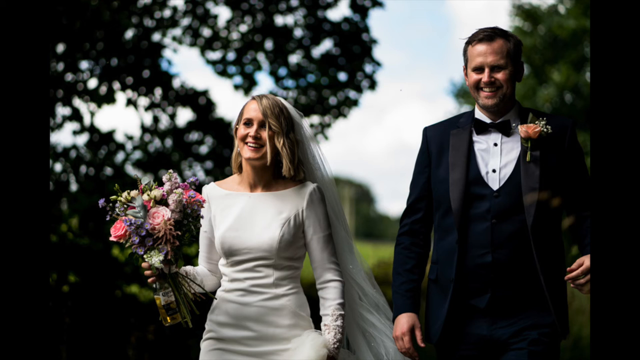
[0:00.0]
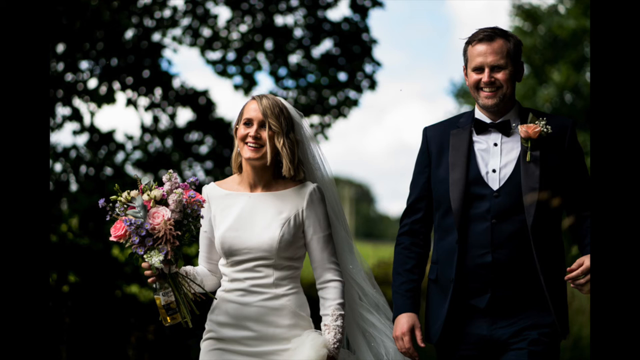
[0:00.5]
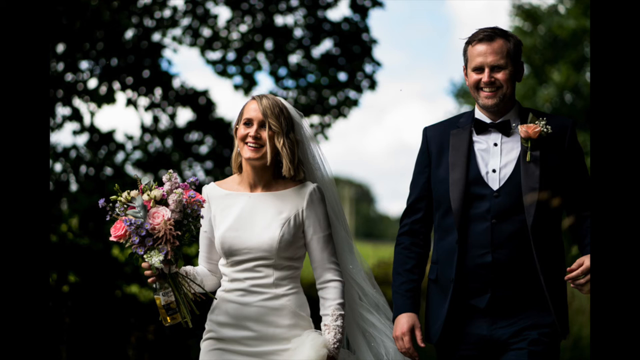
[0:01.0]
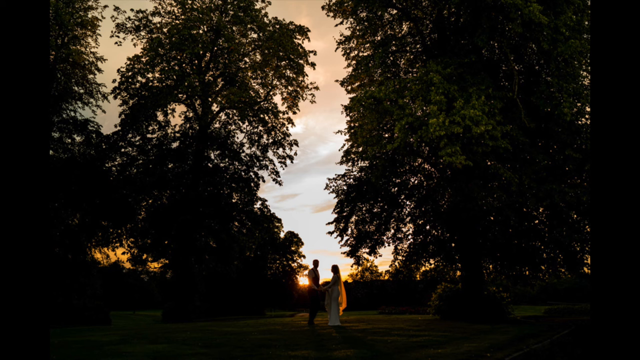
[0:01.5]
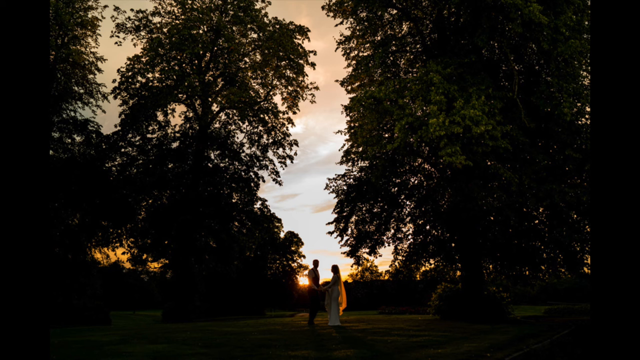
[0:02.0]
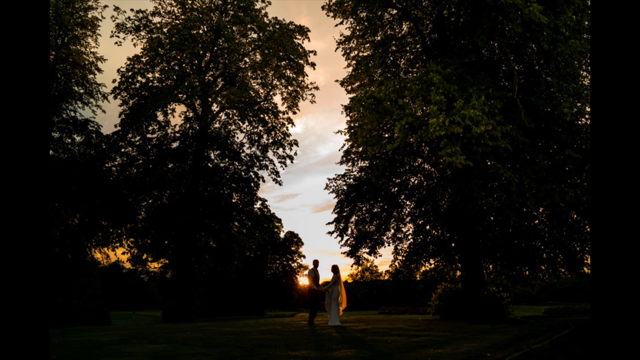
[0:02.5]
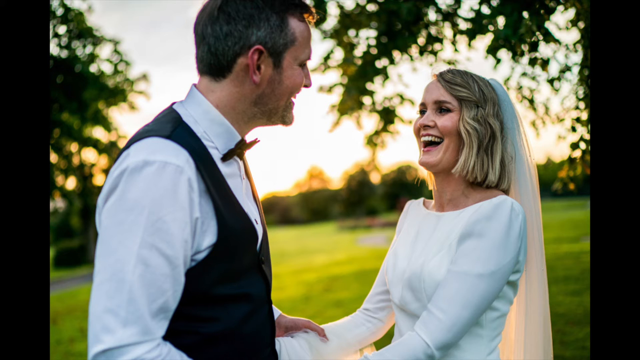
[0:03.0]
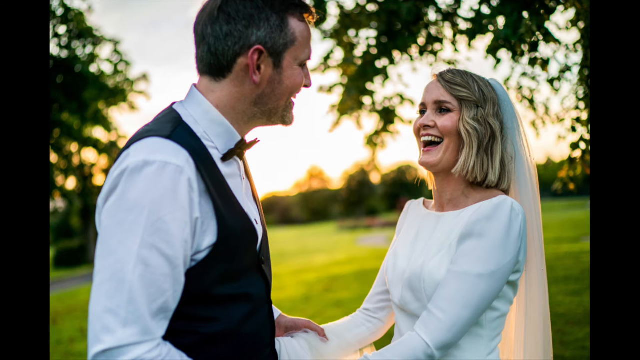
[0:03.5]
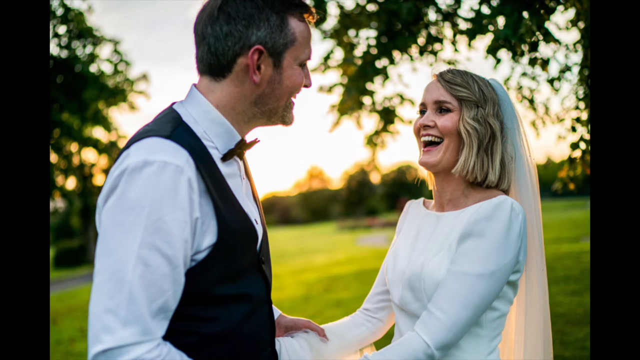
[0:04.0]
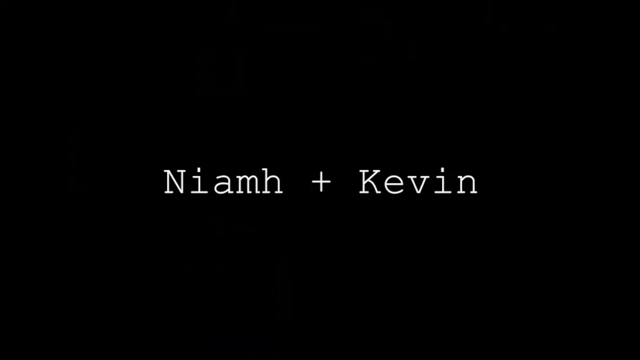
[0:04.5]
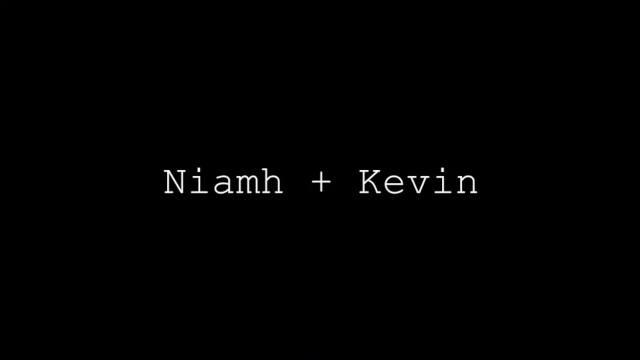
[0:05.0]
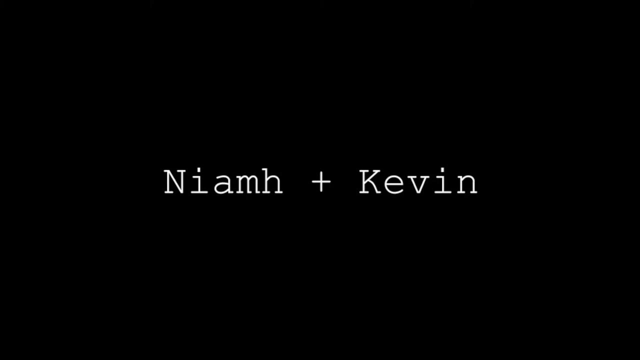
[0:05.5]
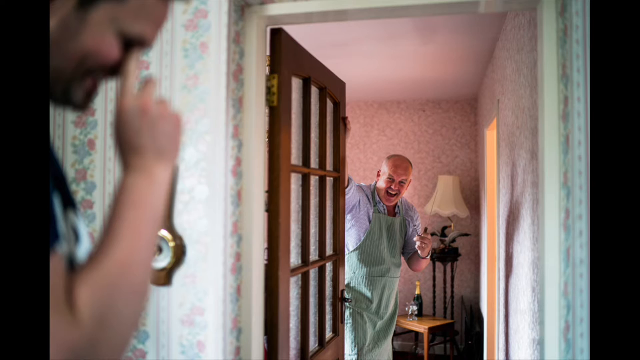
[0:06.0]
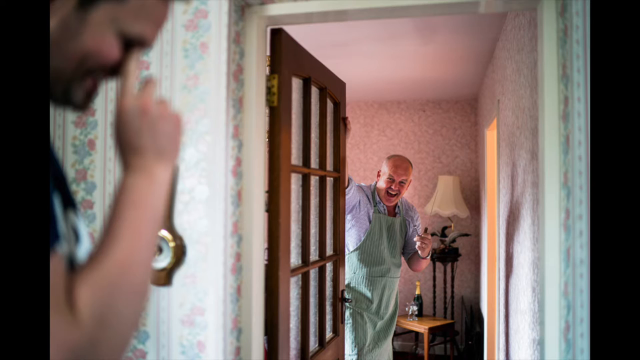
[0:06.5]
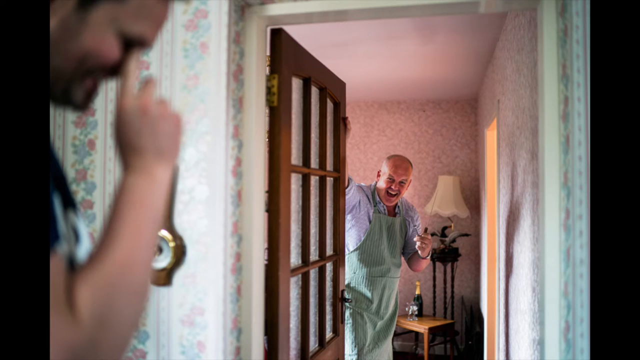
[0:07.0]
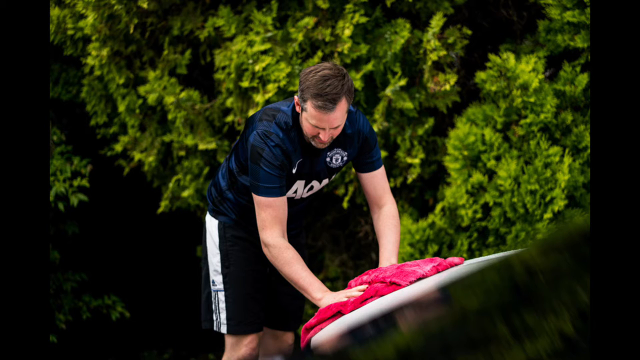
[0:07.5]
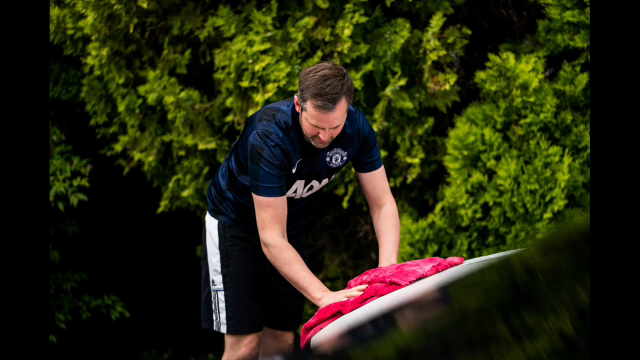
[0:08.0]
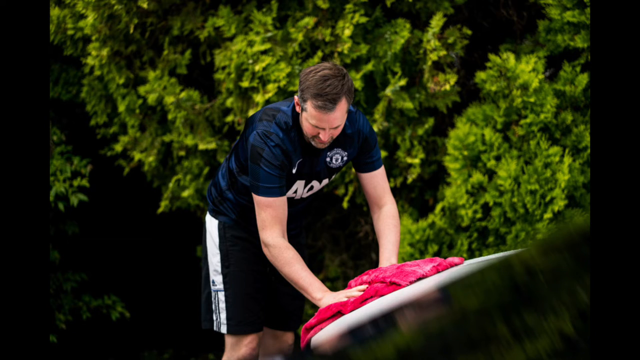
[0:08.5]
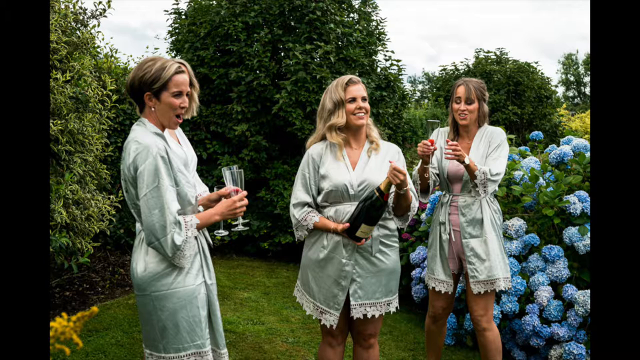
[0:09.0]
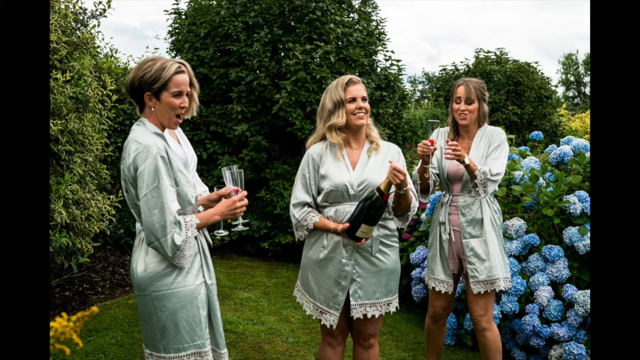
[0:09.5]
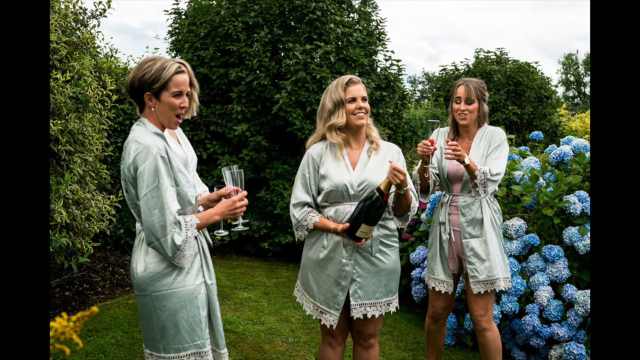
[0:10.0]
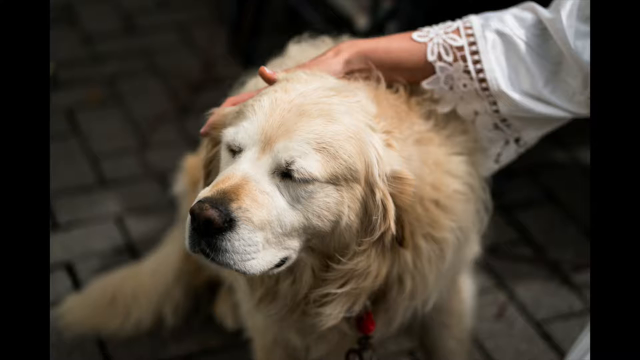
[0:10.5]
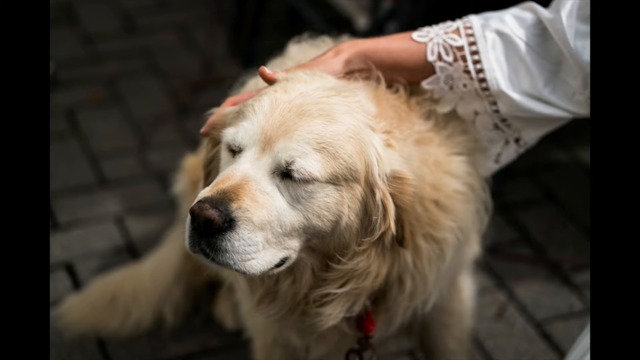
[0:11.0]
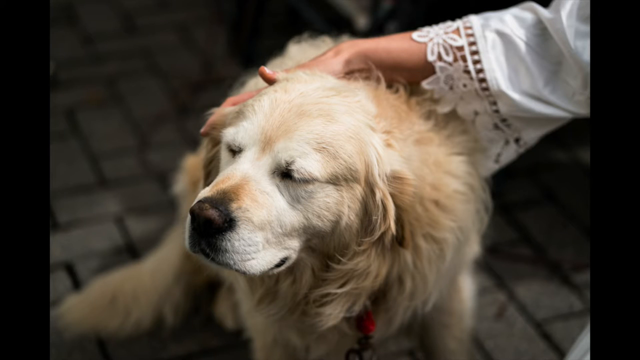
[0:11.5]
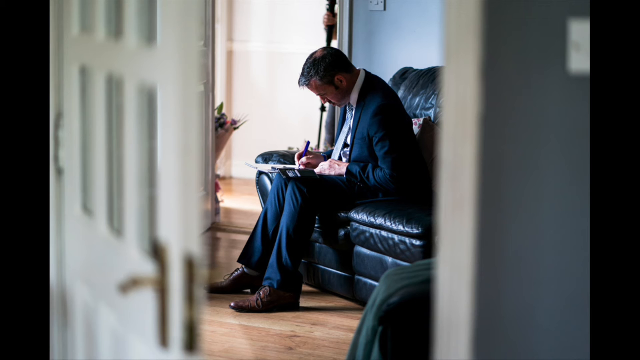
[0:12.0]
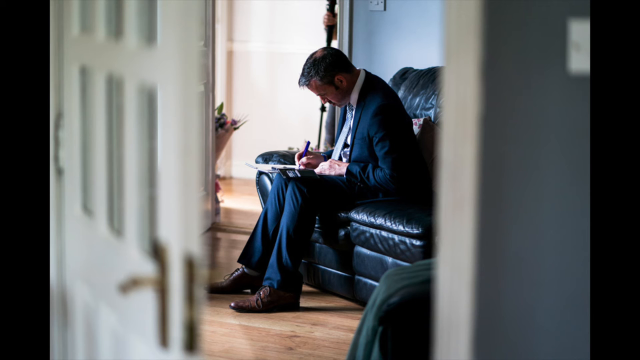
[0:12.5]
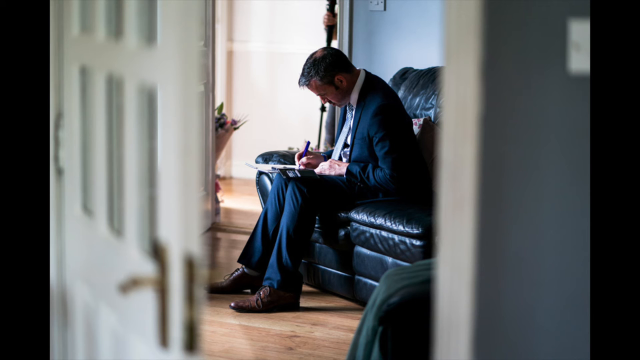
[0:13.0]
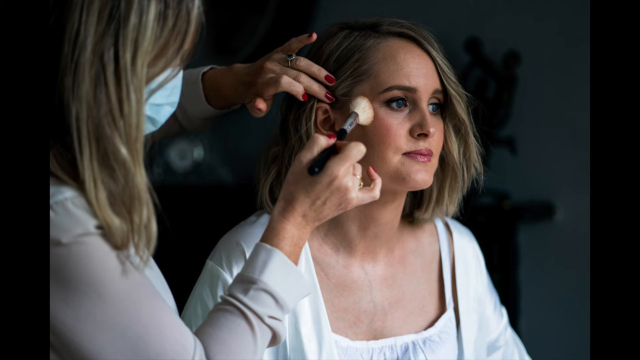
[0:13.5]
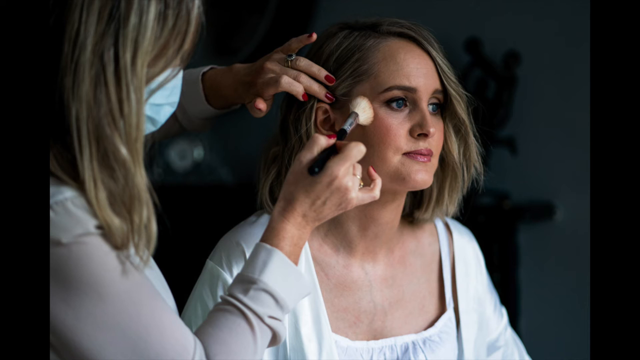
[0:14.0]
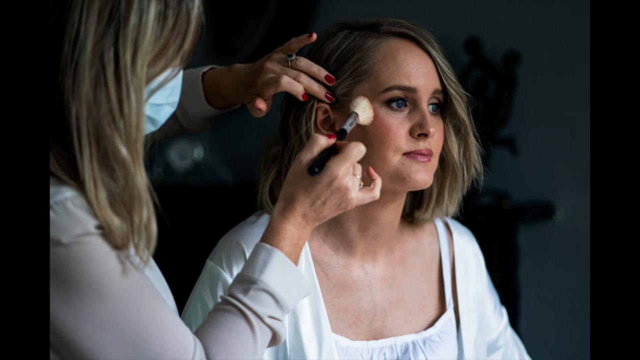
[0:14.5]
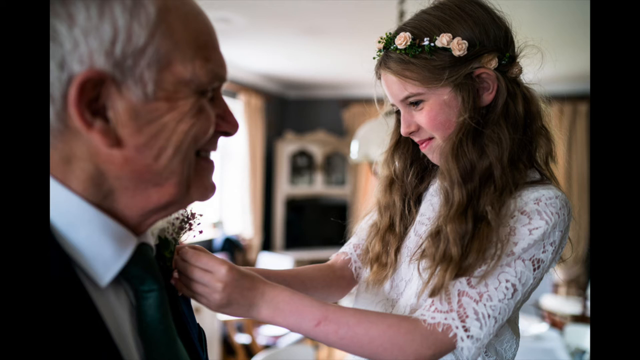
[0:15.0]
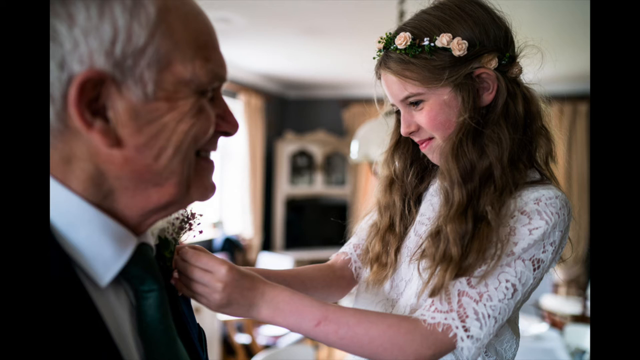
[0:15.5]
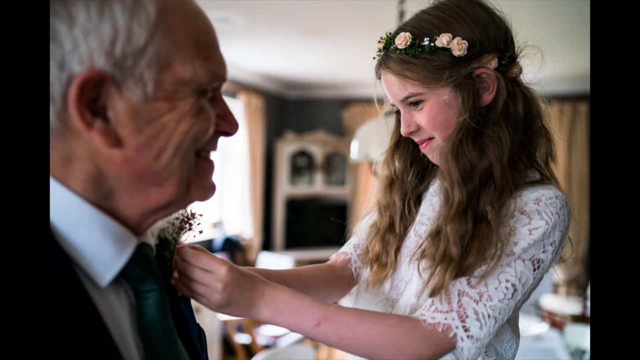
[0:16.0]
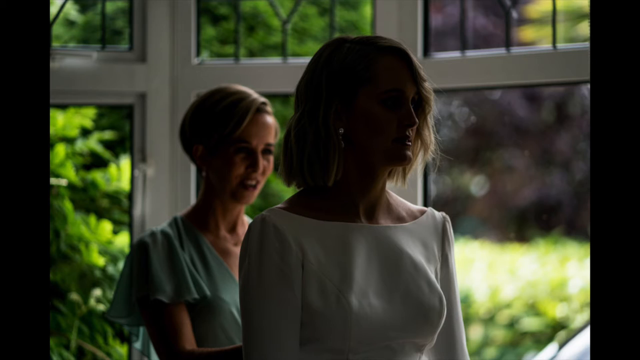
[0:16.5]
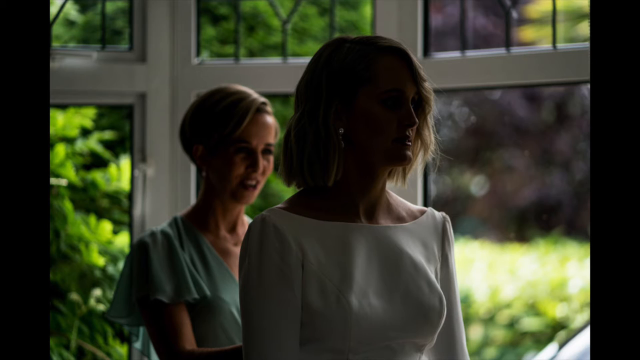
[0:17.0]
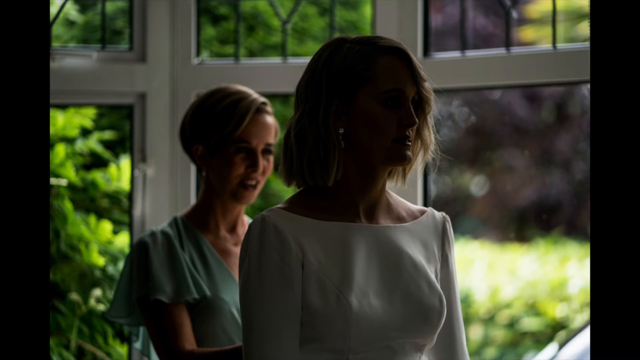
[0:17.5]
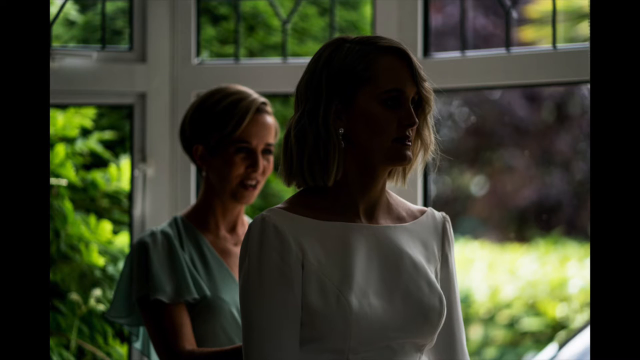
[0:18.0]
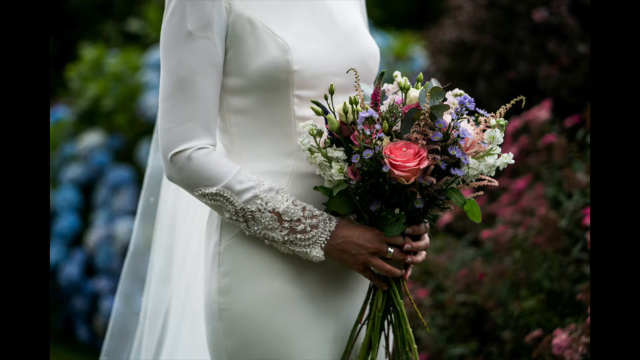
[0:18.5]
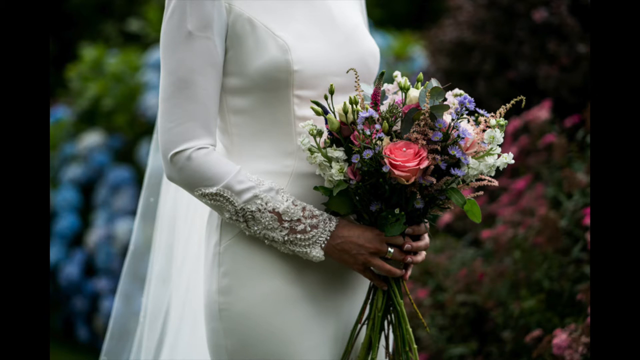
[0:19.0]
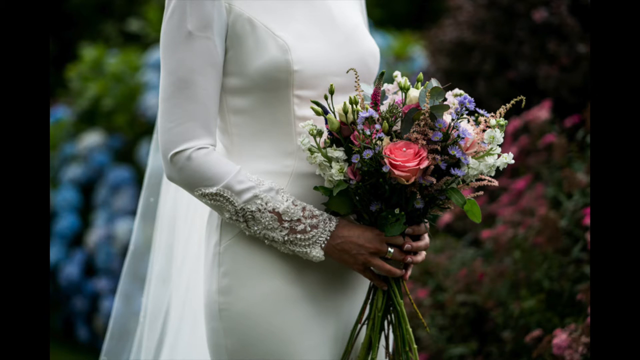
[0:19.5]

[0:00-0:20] A bride and groom walk through a park or national forest, surrounded by tall forest trees. She is blonde and he is brunette. They are then seen at a distance at sunset, holding hands, followed by a close-up of them looking at each other and laughing; she wears a white scoop-neck top, and he wears a white shirt and a black vest, with the warm sun setting behind them. Their names appear on the screen: "Niamh + Kevin". An older man wearing an apron opens a door and laughs at a younger man outside, who is somewhat fuzzy and has his finger up to his eyes. The walls of the house are covered in floral pink wallpaper. A man wipes something down outside with a red towel. A heavier-set blonde woman holds a champagne bottle, with two women on each side of her; they all wear the same short, light green robe. They are outside in what looks like a garden, with blue hydrangeas behind them, and a Labrador dog is seen. Inside the house, a man in a suit writes something on a chair, and a blonde woman sits getting her makeup done. A little flower girl pins a flower on the suit of an older man. The bride has the back of her dress zipped by a friend in a room with a lot of windows. A close-up shows the bride holding a bouquet of flowers in different colors, with beading and pearls on the sleeve of her wedding gown at the wrist; this is outside. Different snapshots follow. Inside the chapel, looking at the entrance, the groom and his best man are seen, while in the blurry background the bride and her father come down the aisle. The guests all stand in anticipation inside the small church with wooden beams.